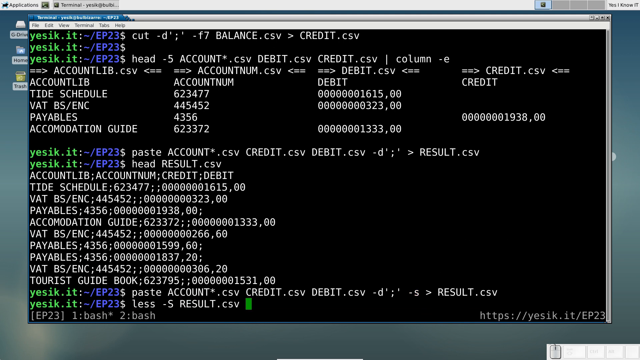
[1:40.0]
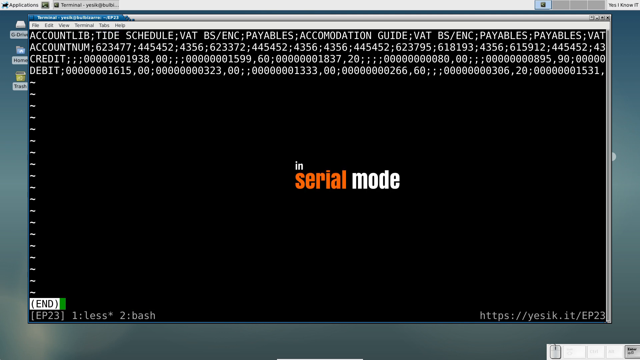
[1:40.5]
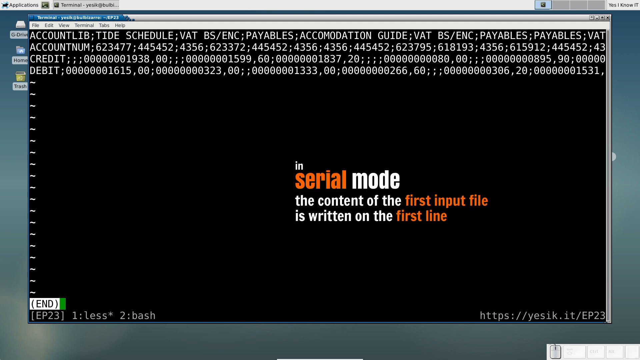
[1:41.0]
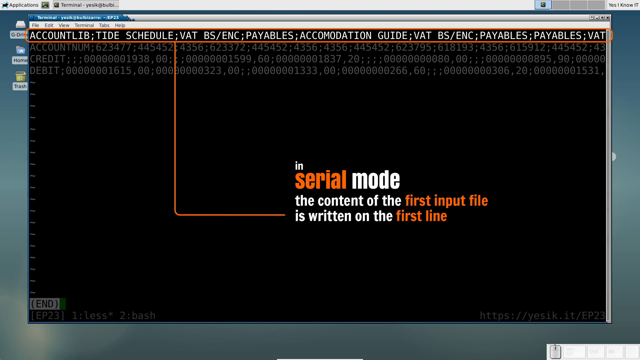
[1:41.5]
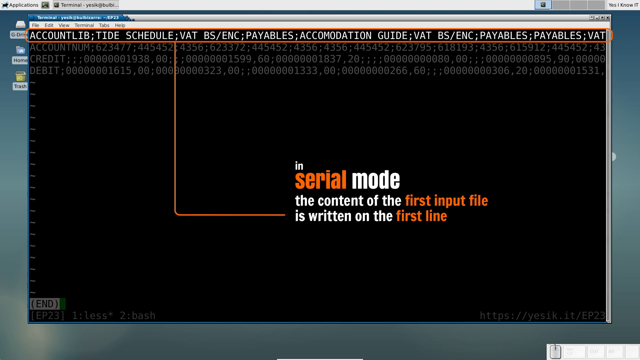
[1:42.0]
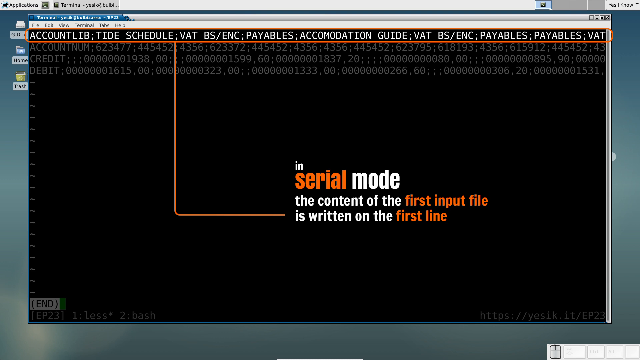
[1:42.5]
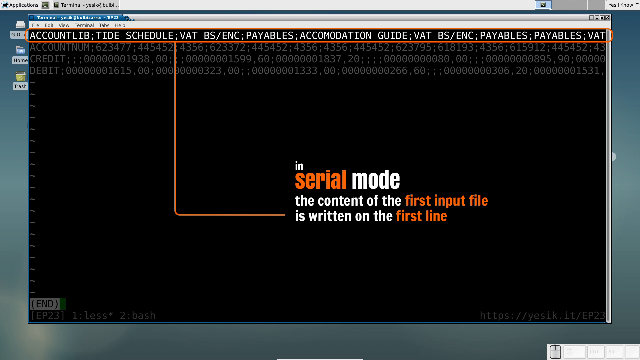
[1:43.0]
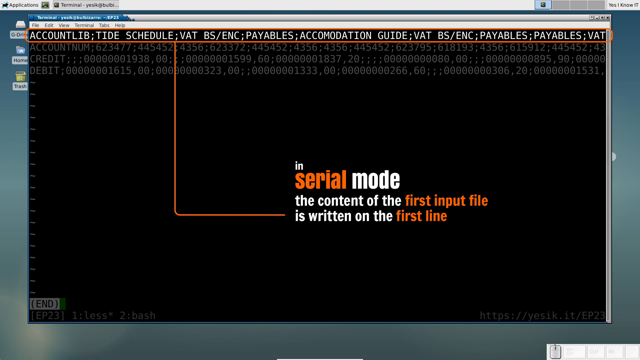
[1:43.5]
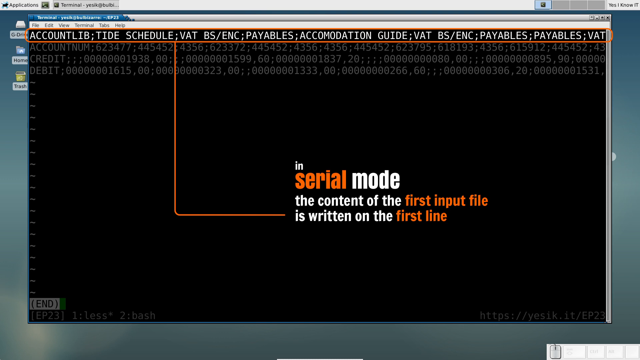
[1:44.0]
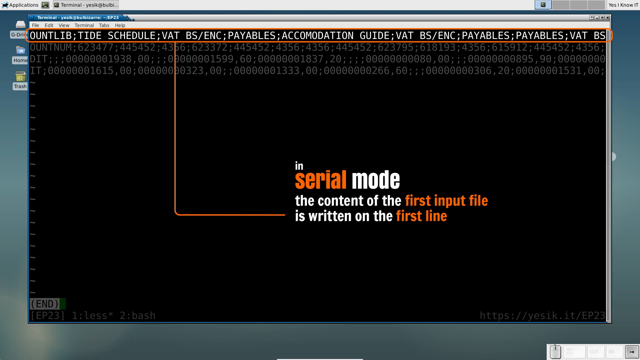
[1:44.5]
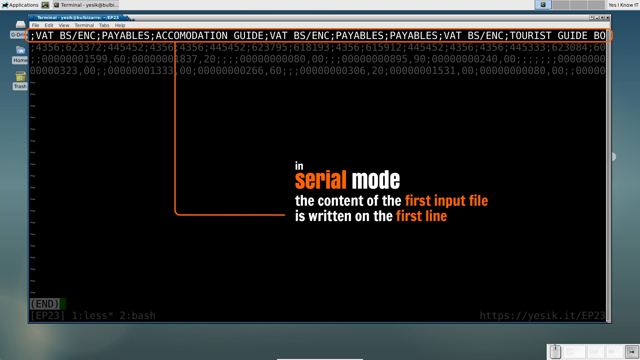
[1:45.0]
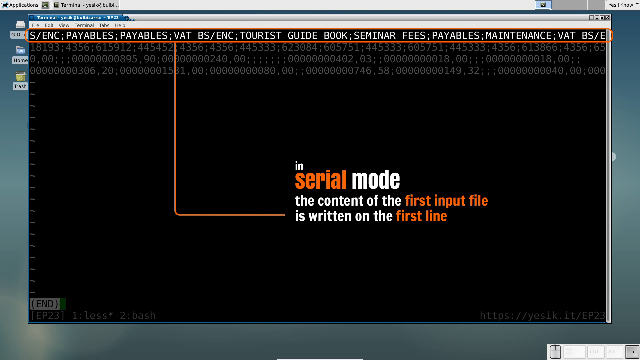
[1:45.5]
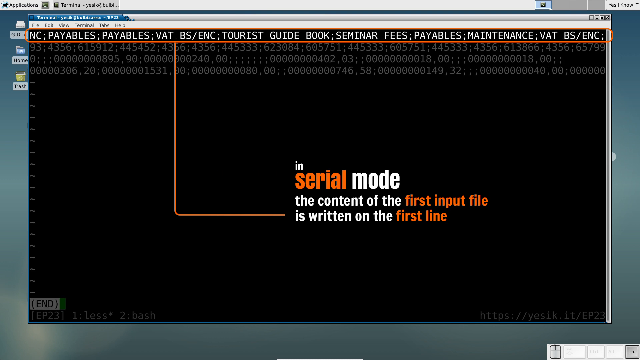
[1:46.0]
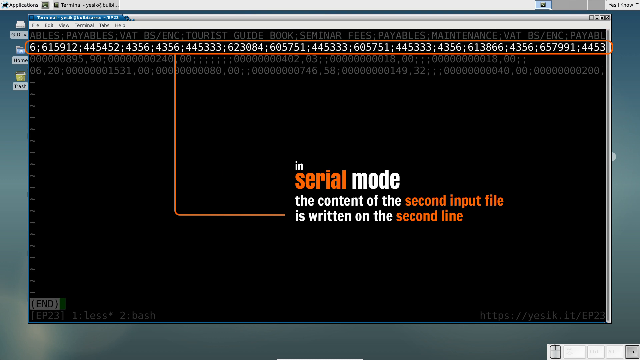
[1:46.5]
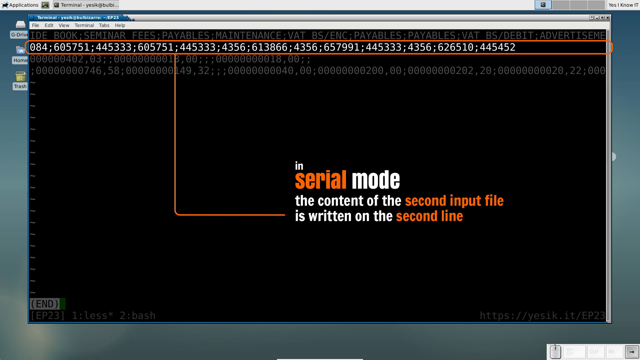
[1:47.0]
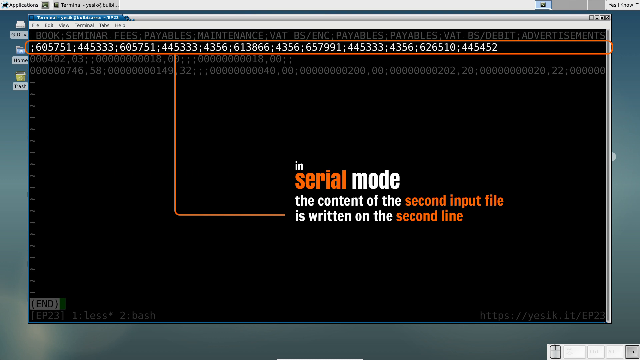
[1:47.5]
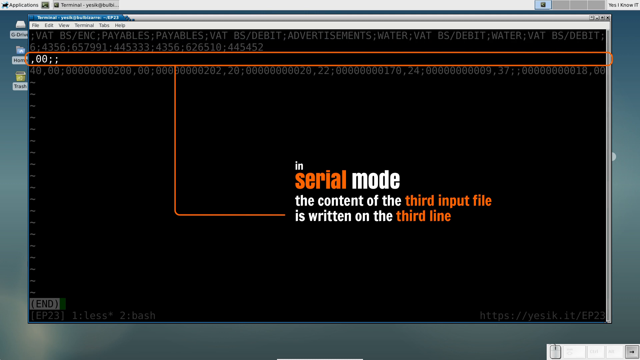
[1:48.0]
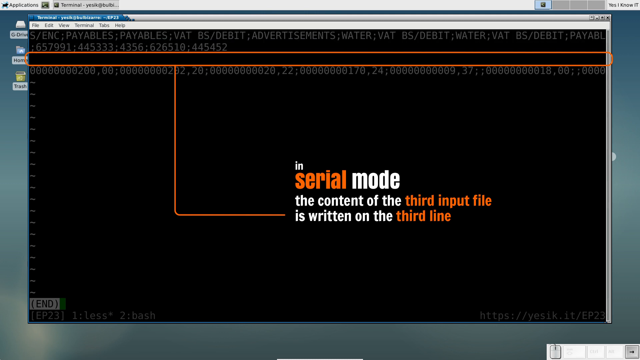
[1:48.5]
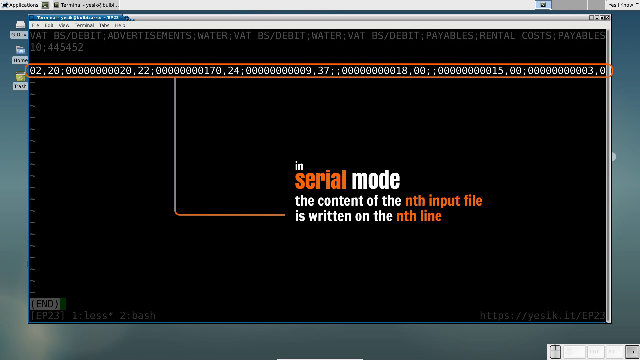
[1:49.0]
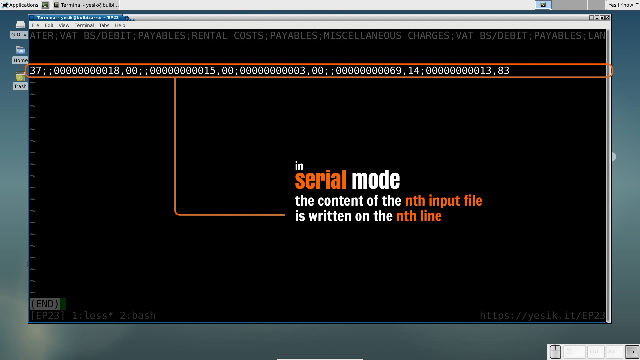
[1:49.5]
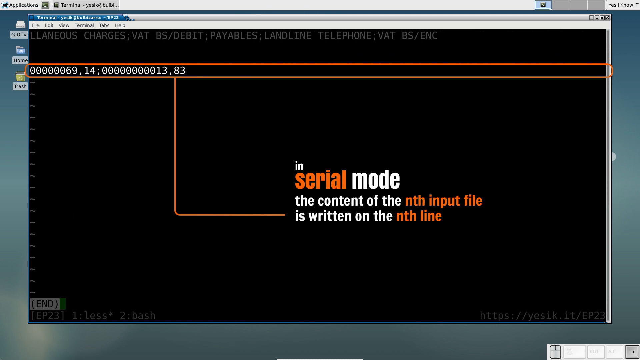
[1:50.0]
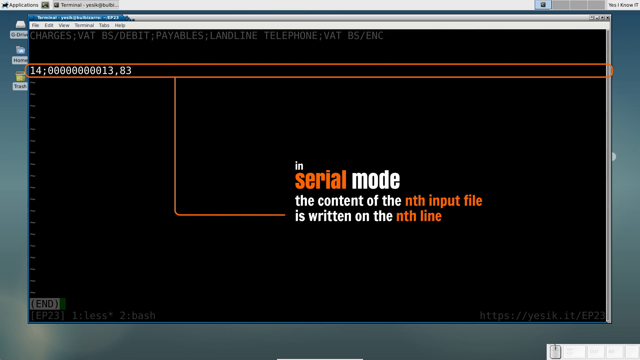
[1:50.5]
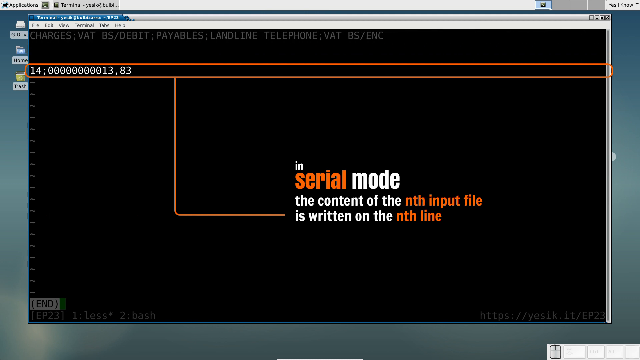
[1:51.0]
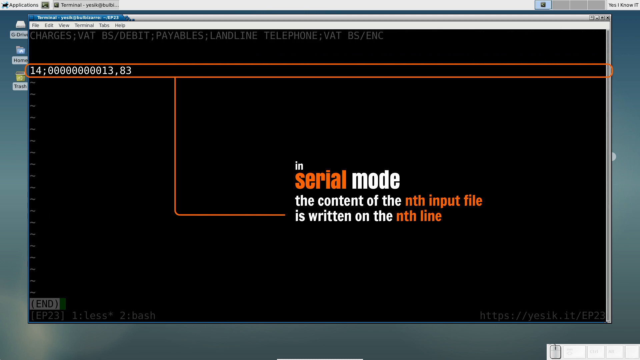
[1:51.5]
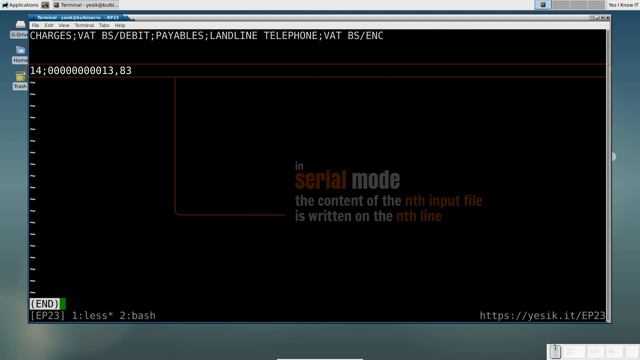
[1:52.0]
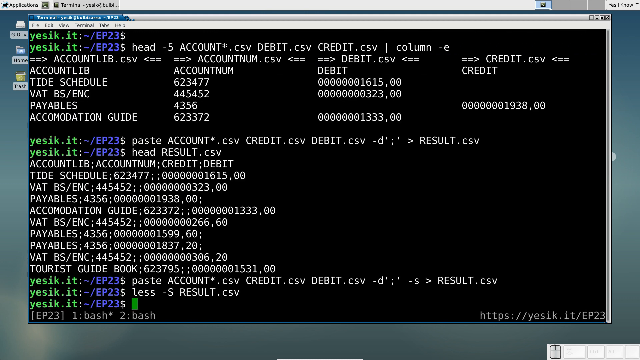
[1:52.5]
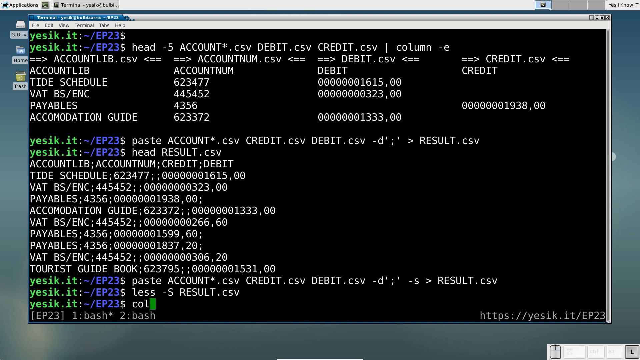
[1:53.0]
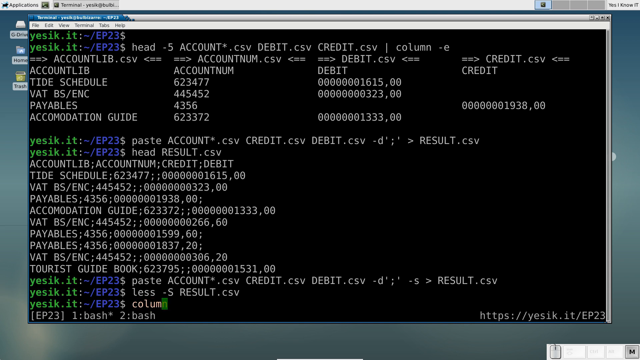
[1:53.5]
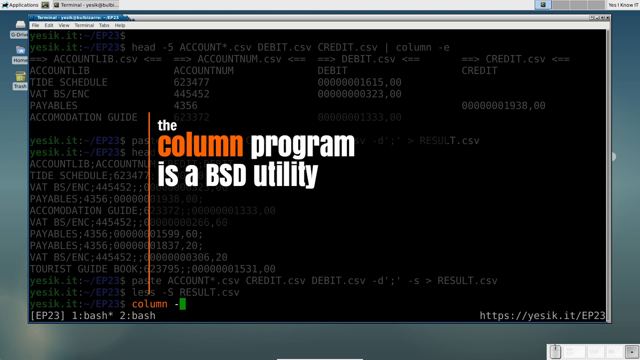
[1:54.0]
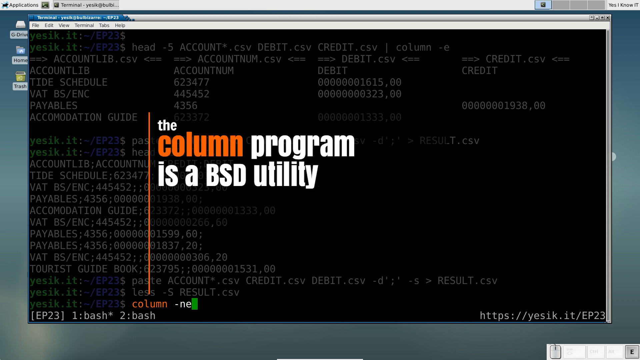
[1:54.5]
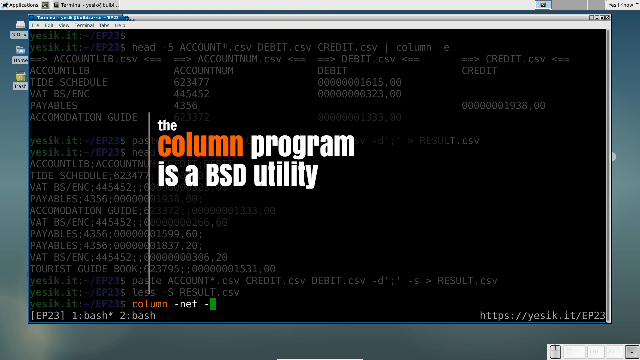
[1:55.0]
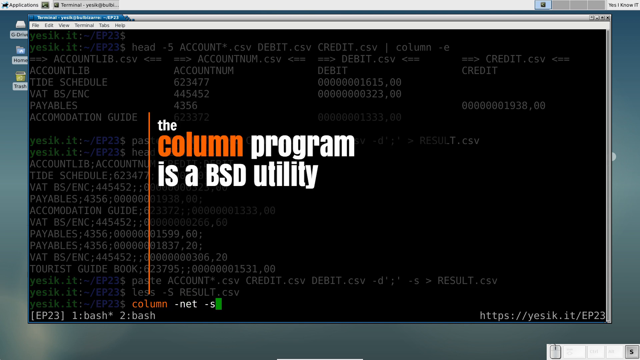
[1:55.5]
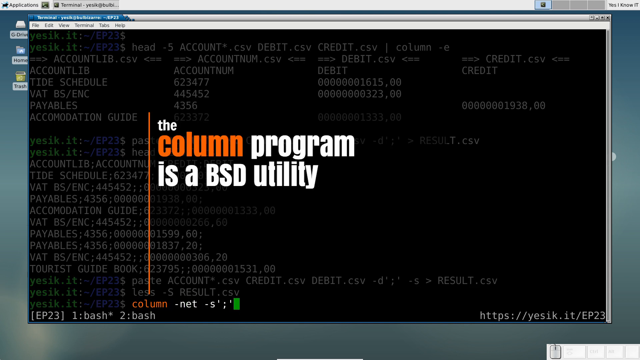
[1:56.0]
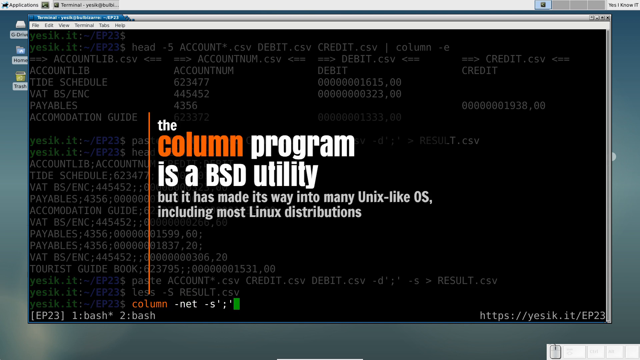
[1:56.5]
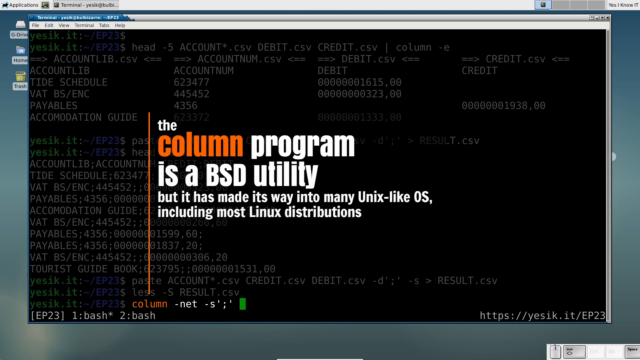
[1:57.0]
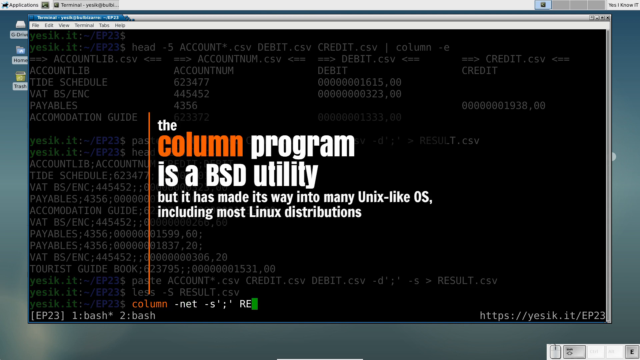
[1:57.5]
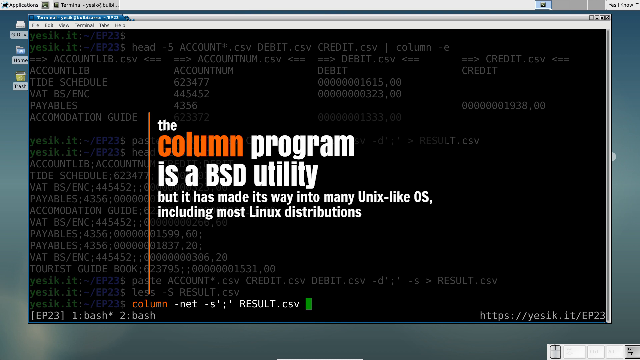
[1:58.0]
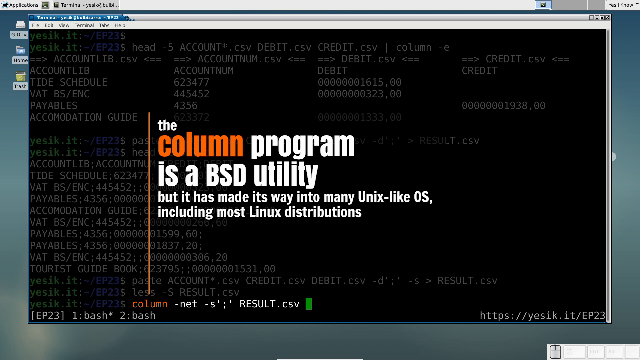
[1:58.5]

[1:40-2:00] On the laptop screen, the green cursor goes away, leaving a little text across the top four rows from left to right. About a third of the way over from the left, an orange line comes down about halfway and then goes right about halfway, with text reading "in serial mode the content of the first input file is written on the first line." The first line has an orange border around it. The view scrolls to the left, down one, to the left, down one, to the left, down to the last one, and to the left some more. It returns to the whole screen covered in text, and typing continues across the bottom. When the typing stops, "column" is typed in orange. A line goes up, and to the right of it text reads "the column program is a BSD utility." More text appears under that in white: "but it has its way into many Unix-like OS, including most Linux distributions."